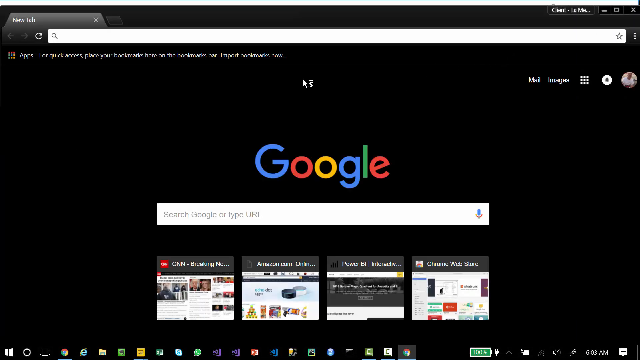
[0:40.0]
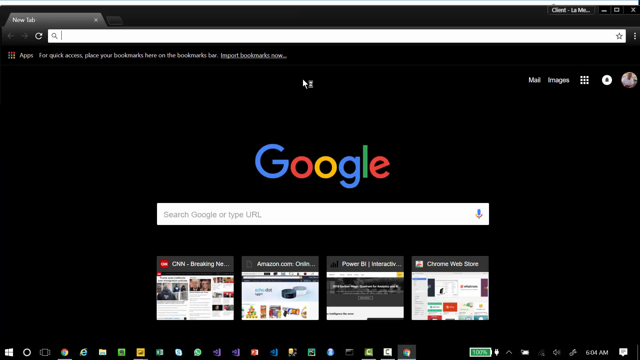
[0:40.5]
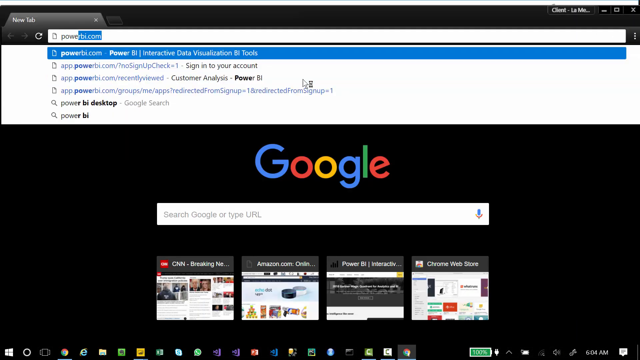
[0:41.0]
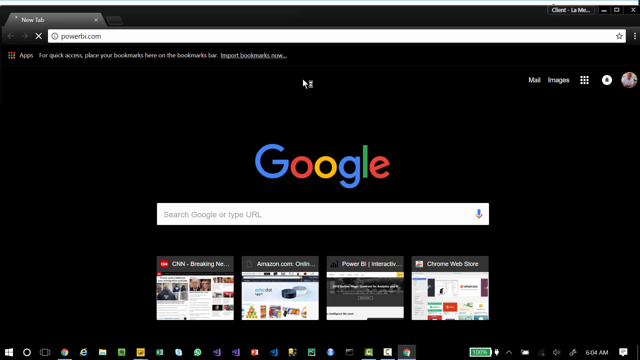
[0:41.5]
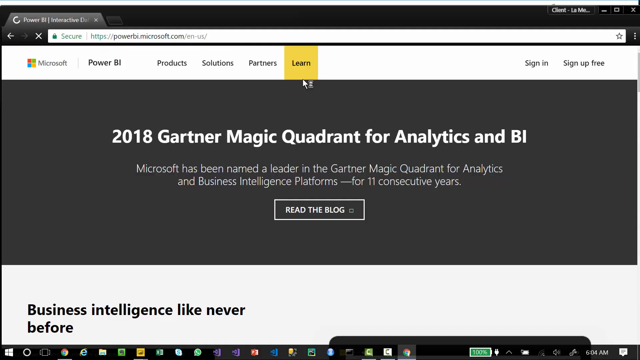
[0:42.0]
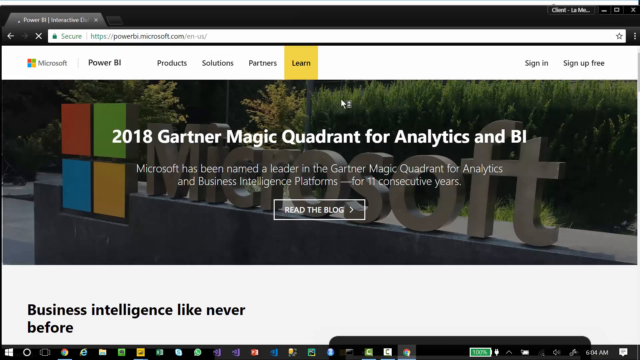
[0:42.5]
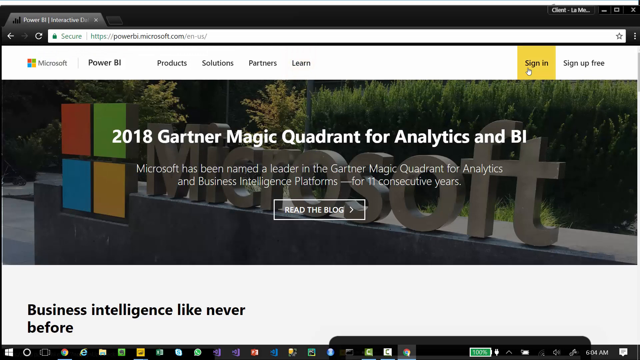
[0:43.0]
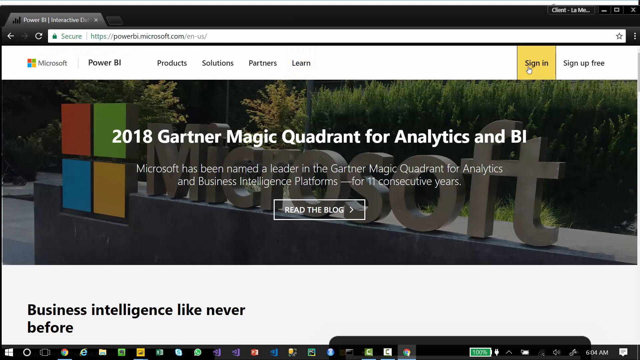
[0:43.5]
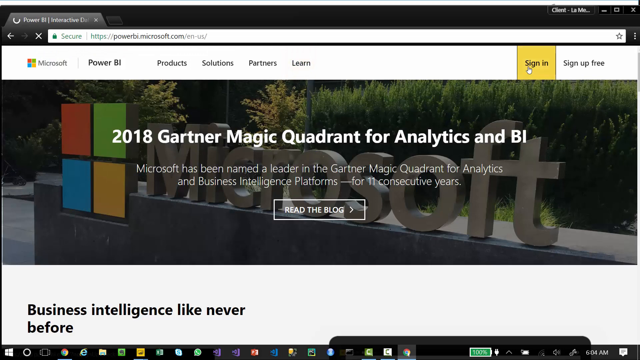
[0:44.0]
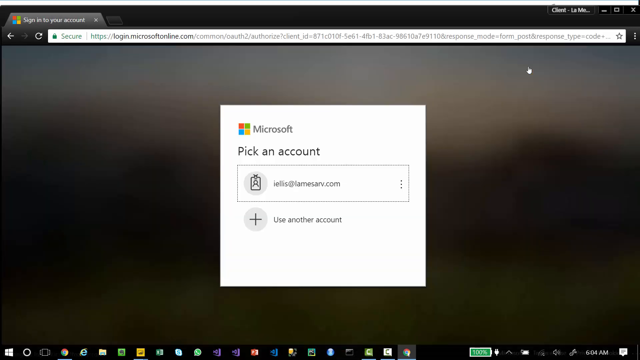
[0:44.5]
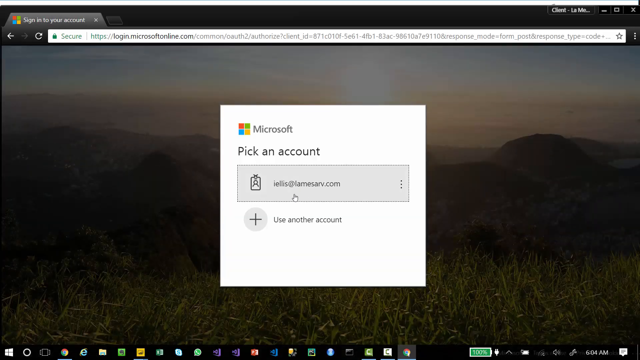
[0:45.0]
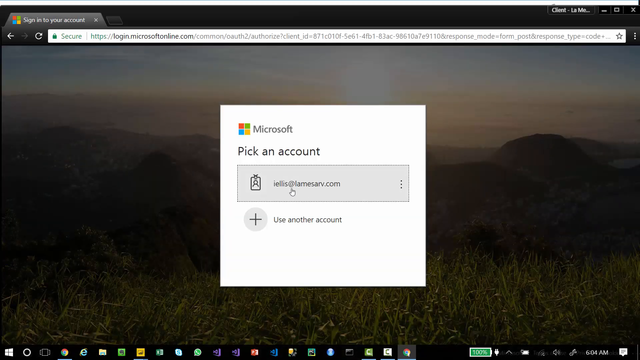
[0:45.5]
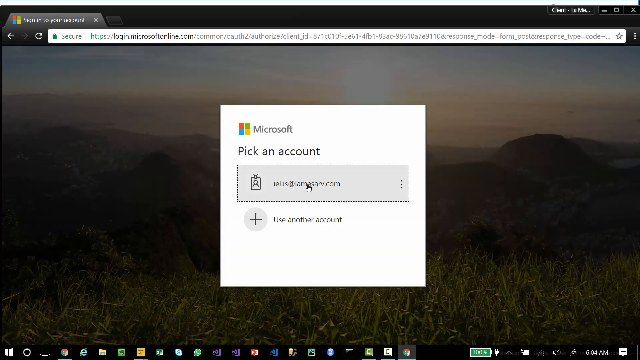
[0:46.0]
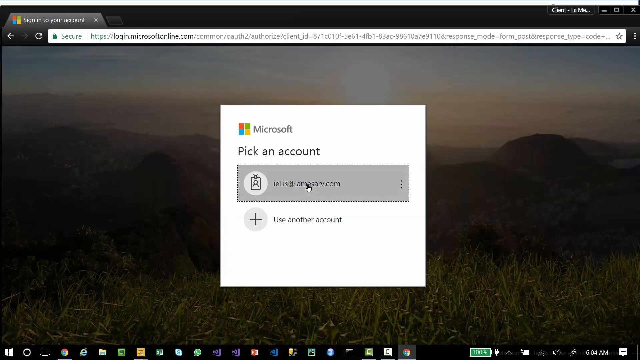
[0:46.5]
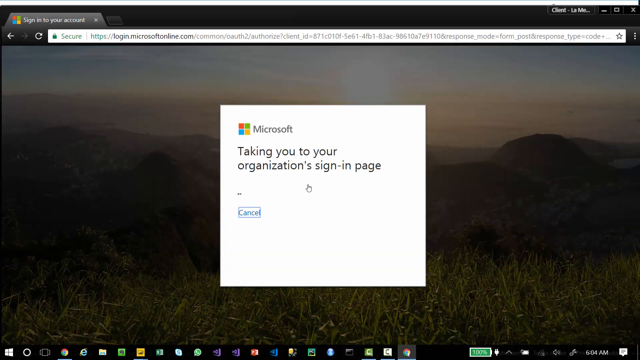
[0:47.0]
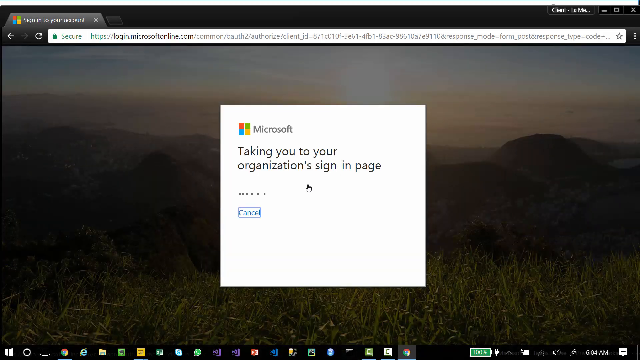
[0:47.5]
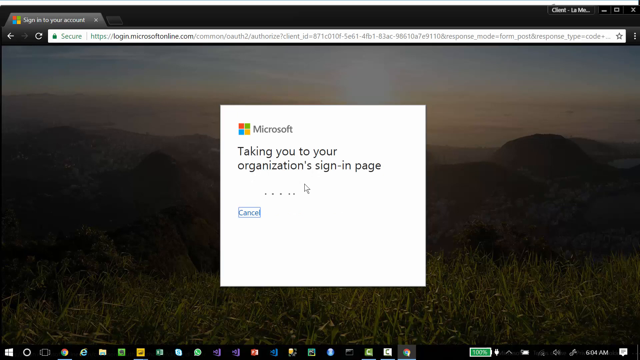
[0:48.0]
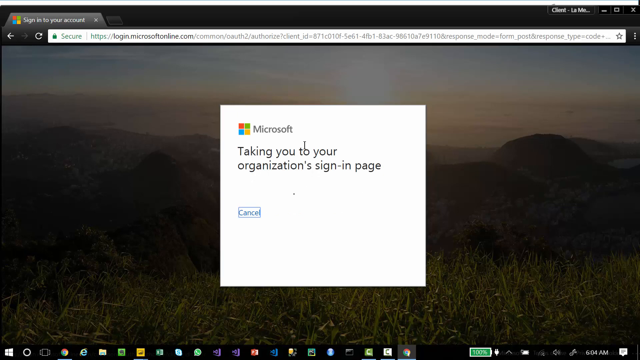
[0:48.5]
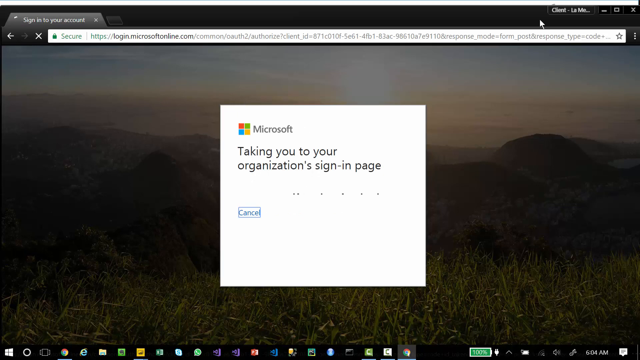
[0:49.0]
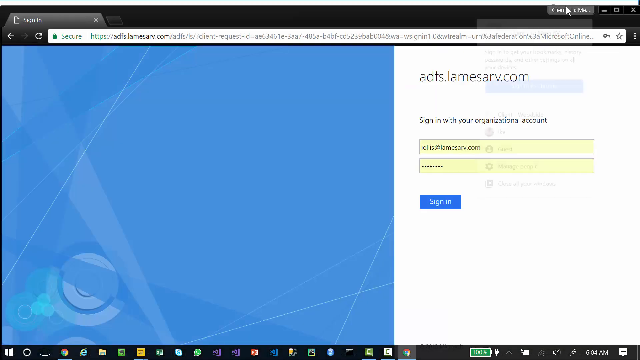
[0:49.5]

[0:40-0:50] A box appears for choosing which account to log into for the Microsoft account. The background of the Google screen is pitch black instead of the standard white.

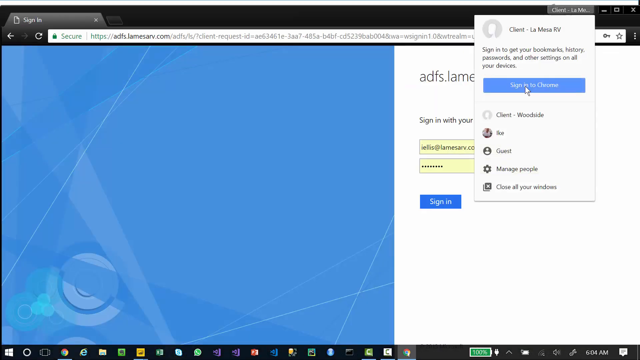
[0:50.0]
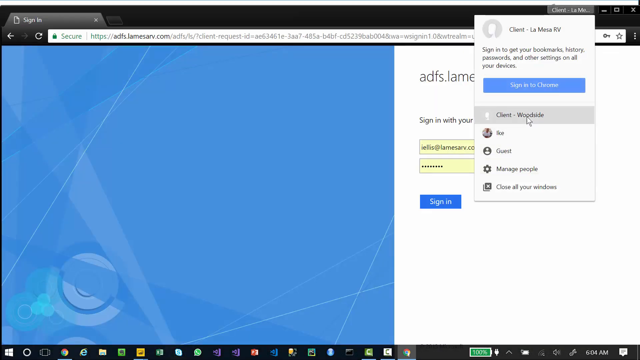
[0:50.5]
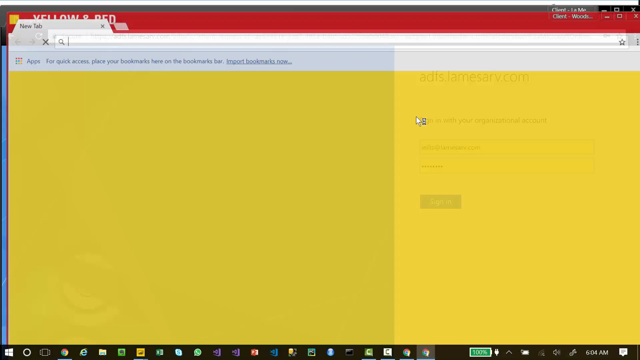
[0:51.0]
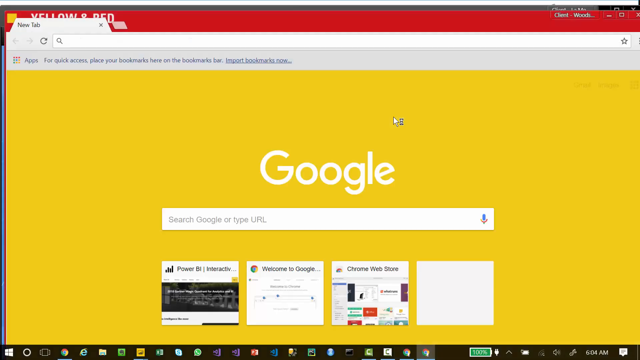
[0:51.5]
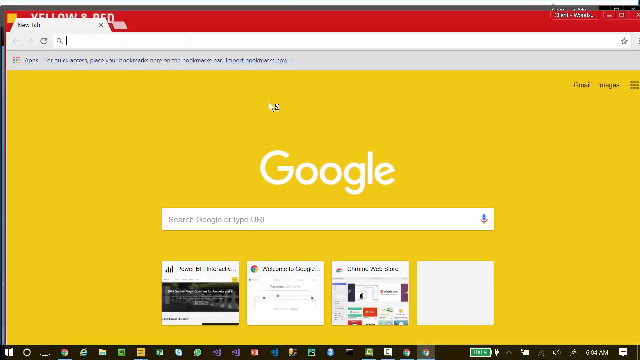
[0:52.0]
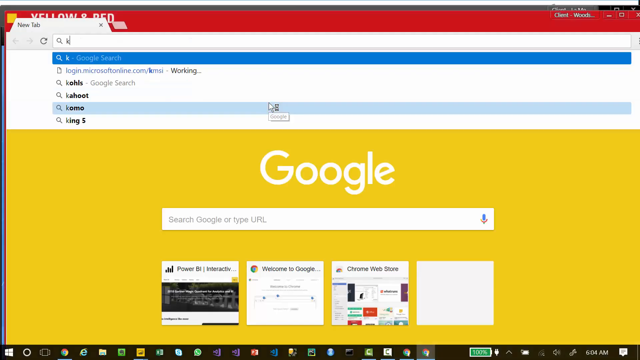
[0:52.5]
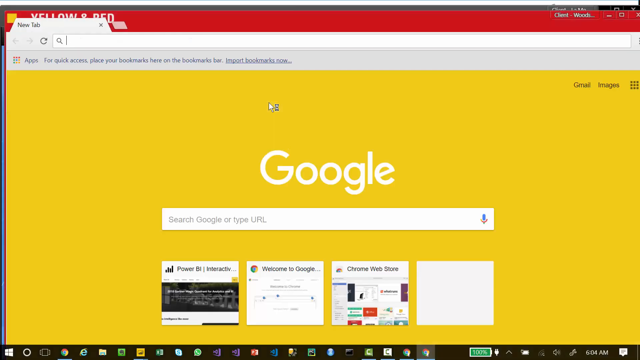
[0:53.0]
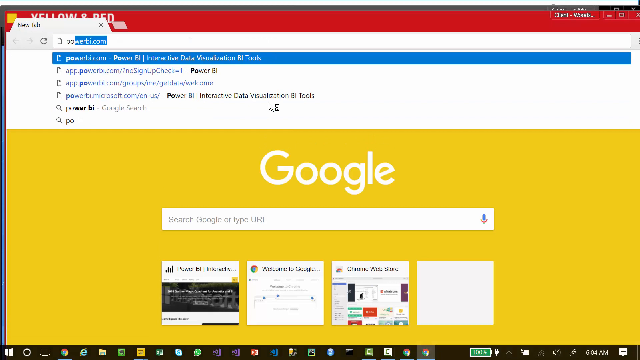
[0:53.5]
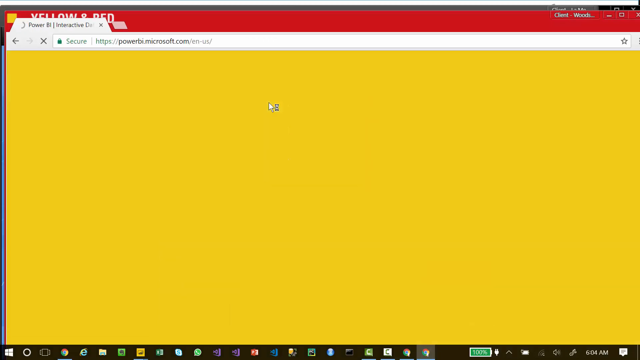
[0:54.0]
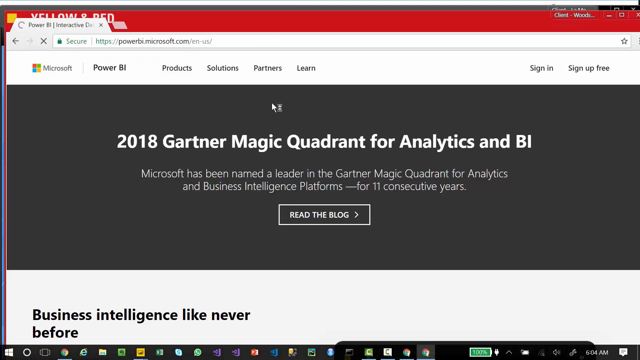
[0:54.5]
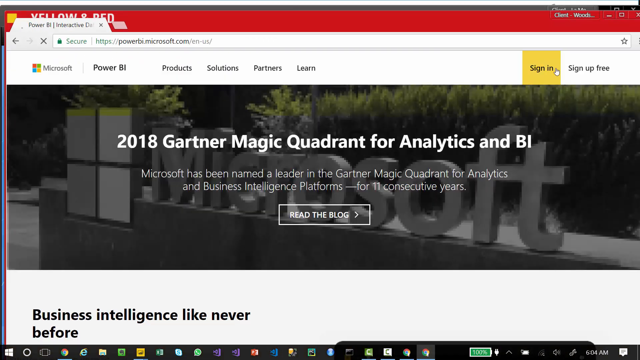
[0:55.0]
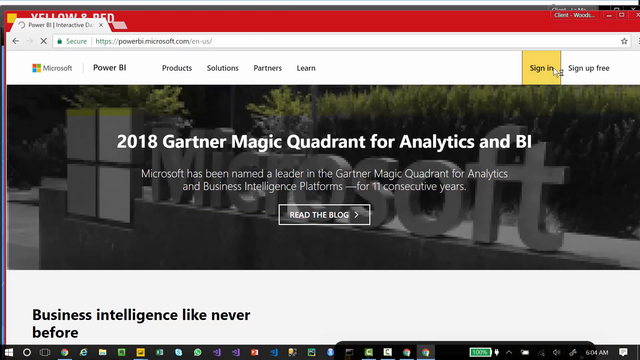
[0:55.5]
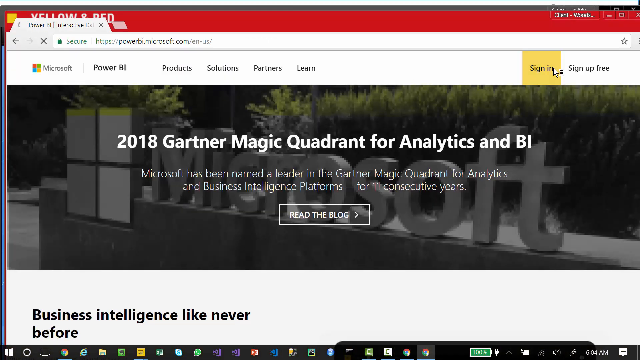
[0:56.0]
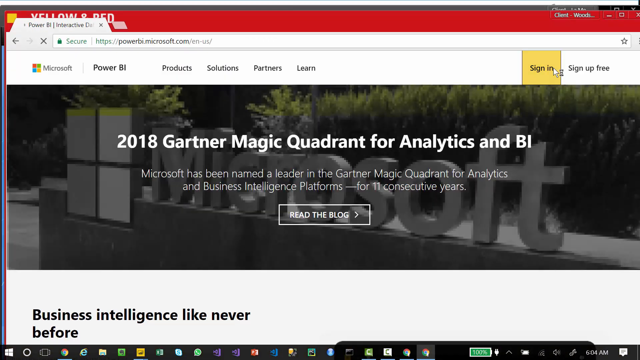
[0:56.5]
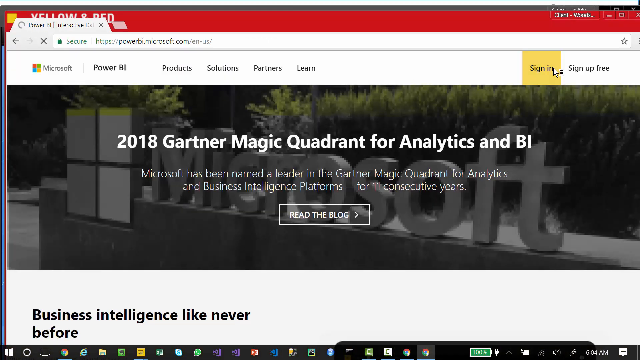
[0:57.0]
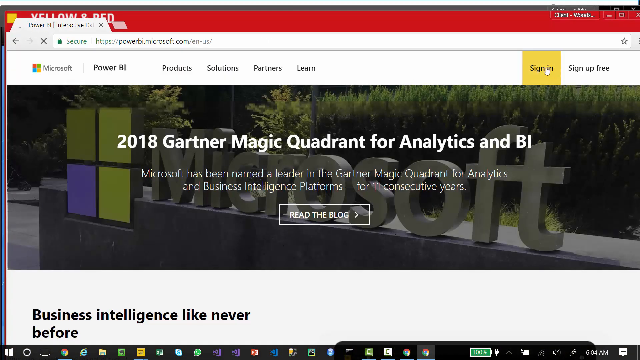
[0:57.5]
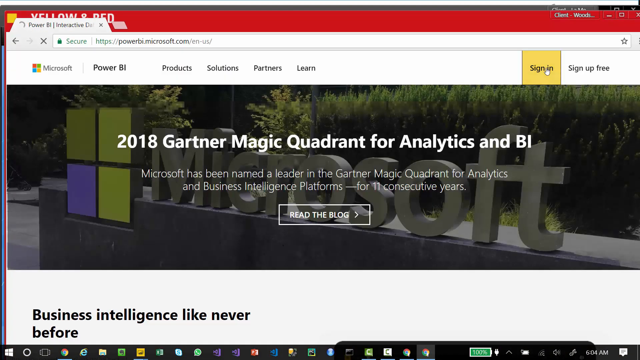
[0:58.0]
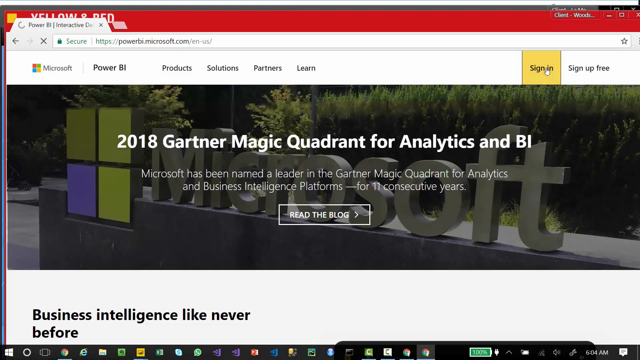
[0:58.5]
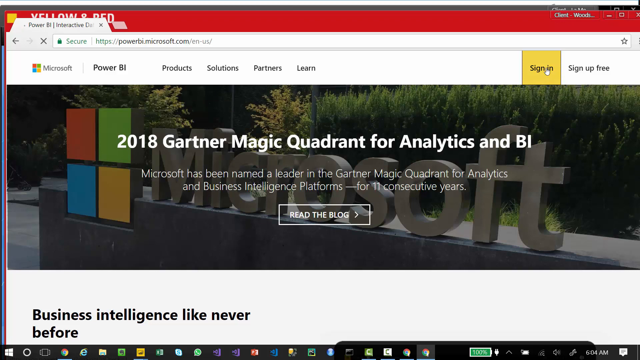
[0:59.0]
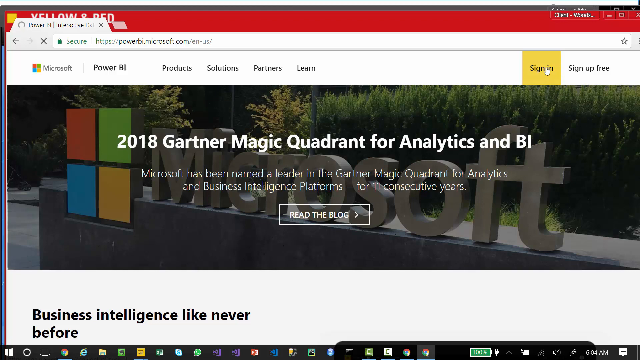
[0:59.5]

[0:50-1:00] A Google screen with a yellow background is shown. It then goes to the 2018 Gartner Magic Quadrant for analytics and BI. The person hovers the mouse over the "Sign into Chrome" section on the right-hand side of the screen, and it changes from a gray background to a blue background as it is highlighted under the mouse.